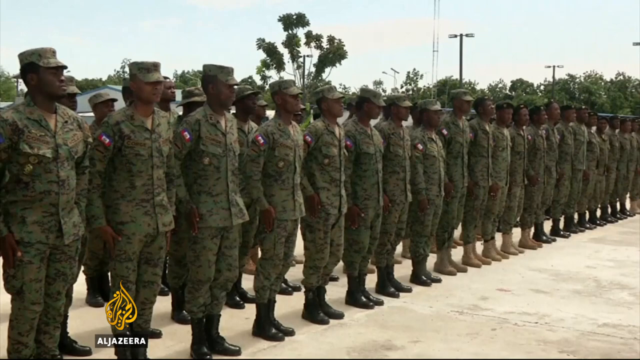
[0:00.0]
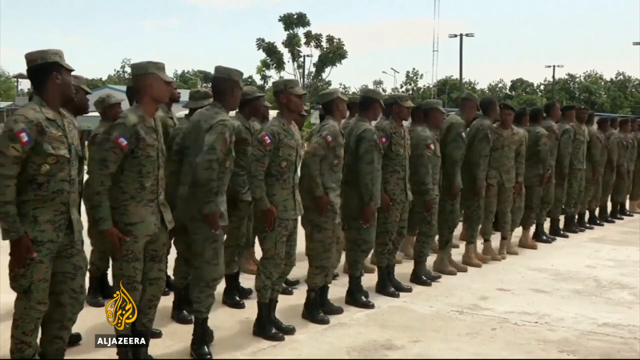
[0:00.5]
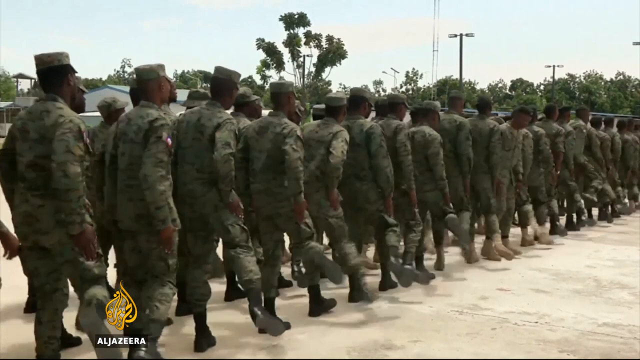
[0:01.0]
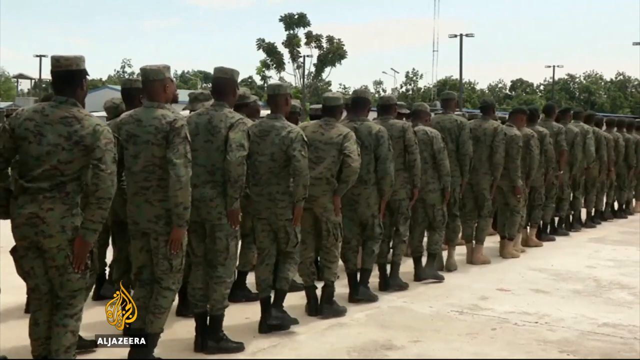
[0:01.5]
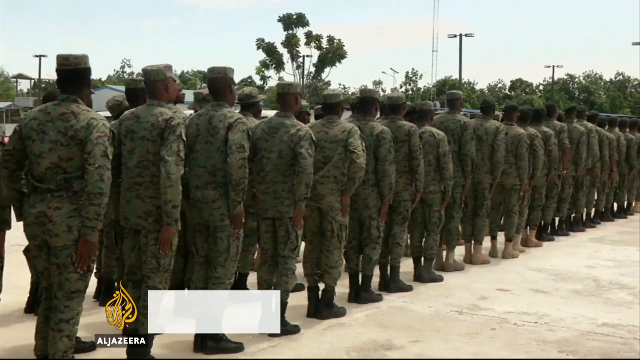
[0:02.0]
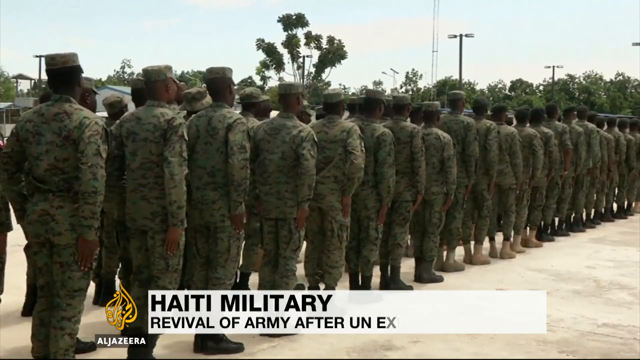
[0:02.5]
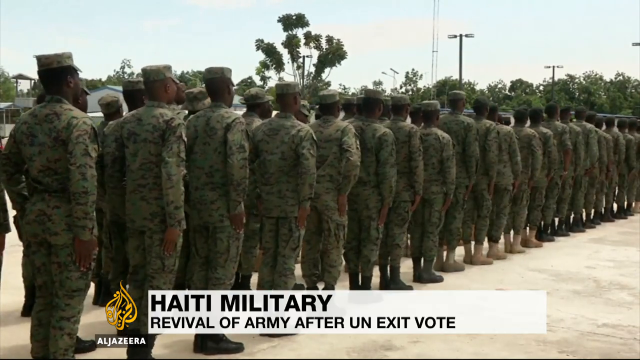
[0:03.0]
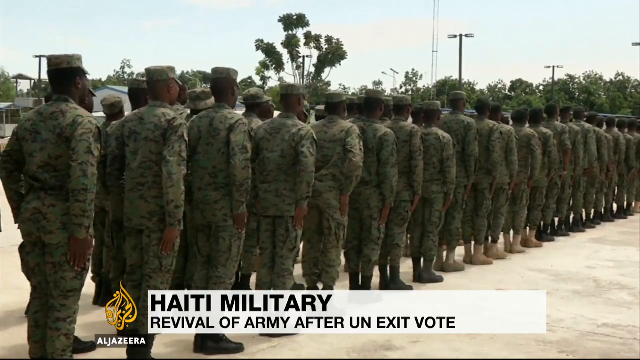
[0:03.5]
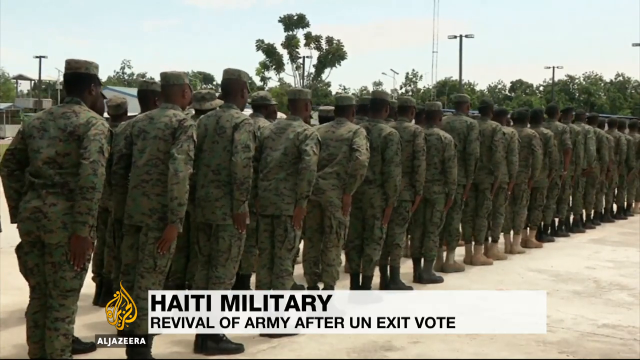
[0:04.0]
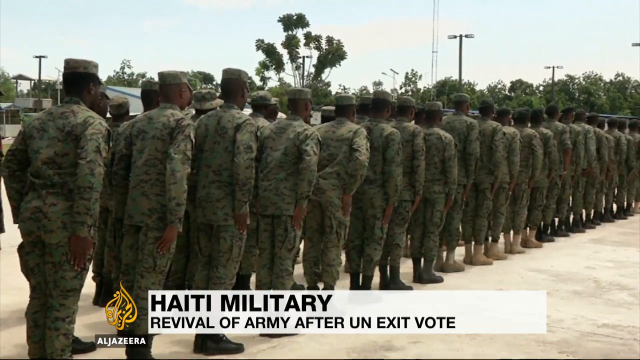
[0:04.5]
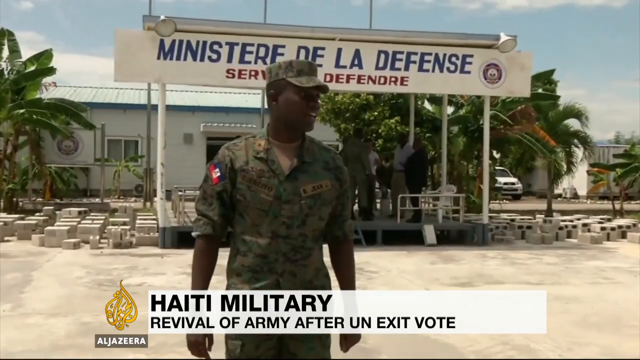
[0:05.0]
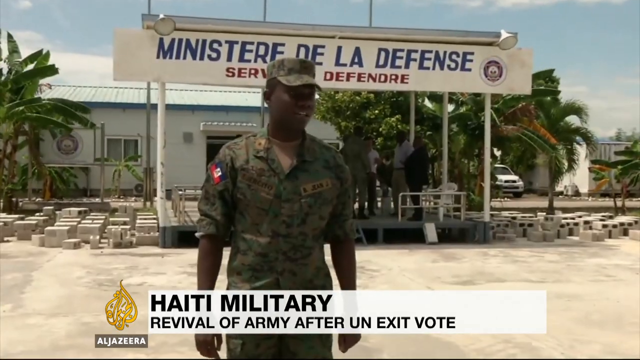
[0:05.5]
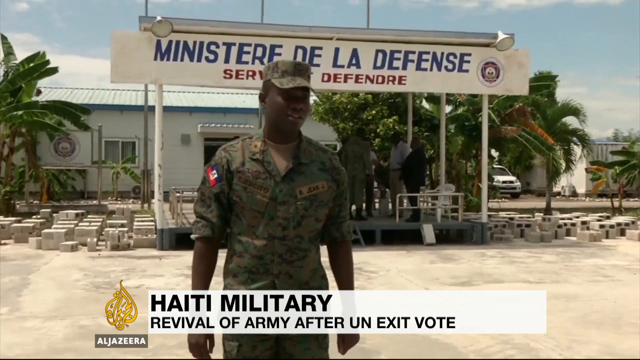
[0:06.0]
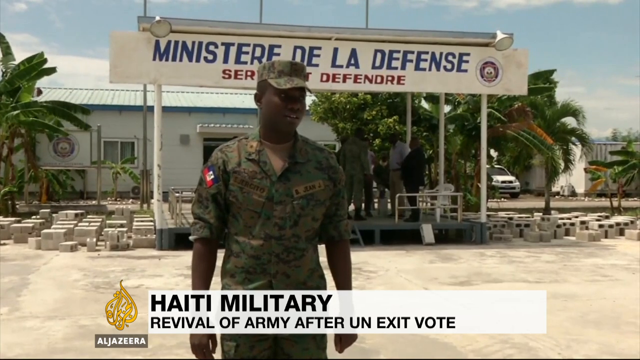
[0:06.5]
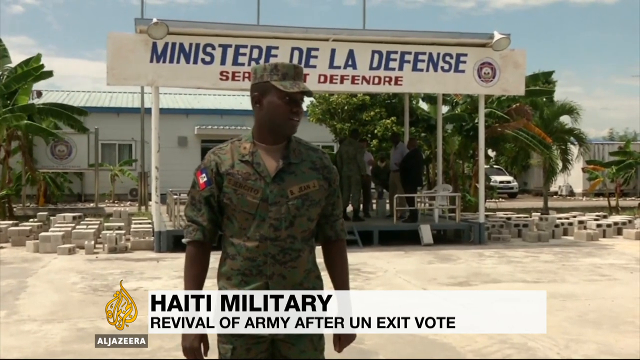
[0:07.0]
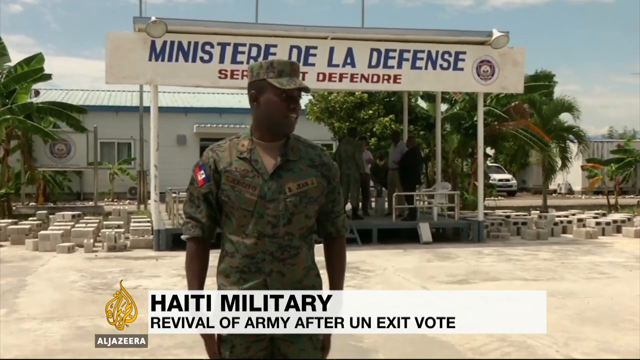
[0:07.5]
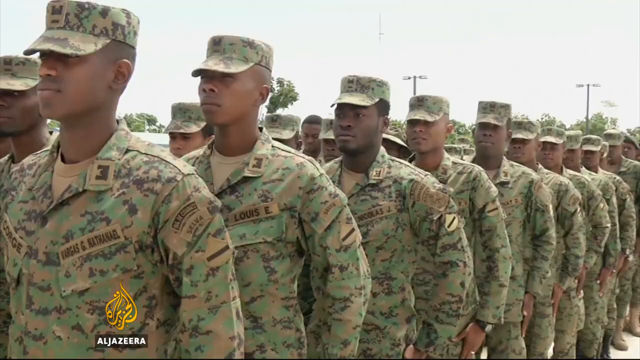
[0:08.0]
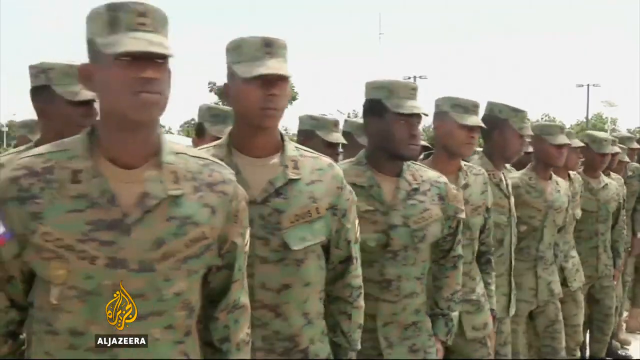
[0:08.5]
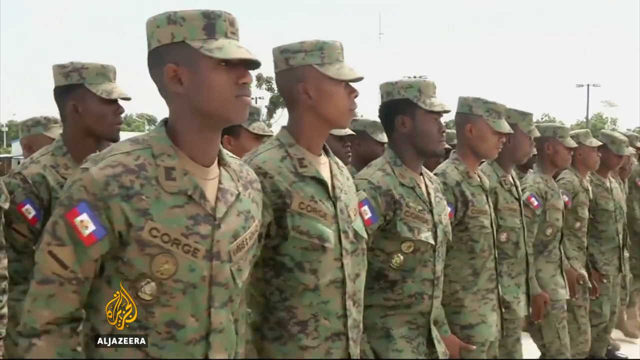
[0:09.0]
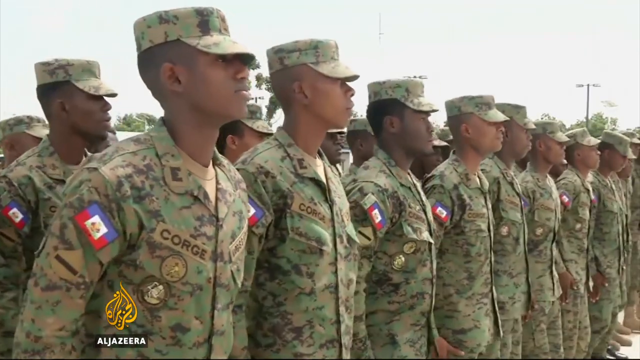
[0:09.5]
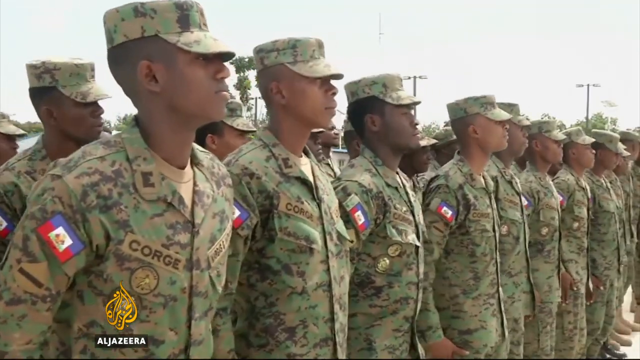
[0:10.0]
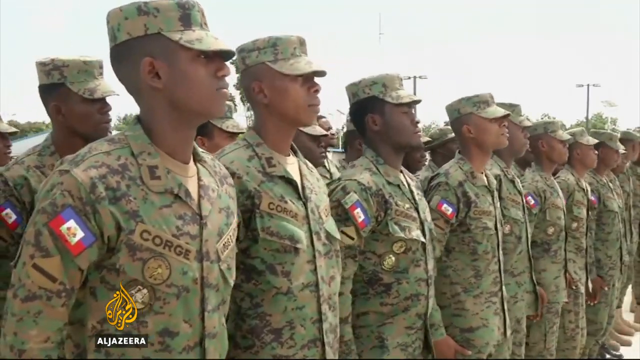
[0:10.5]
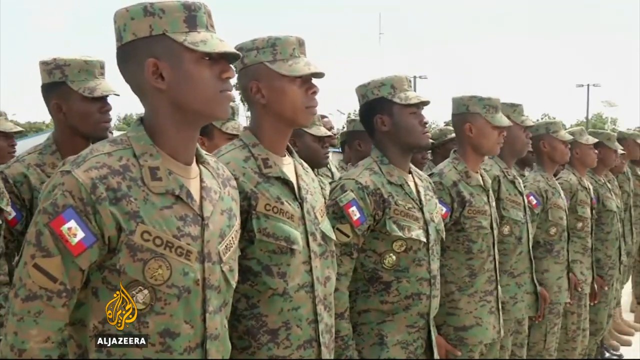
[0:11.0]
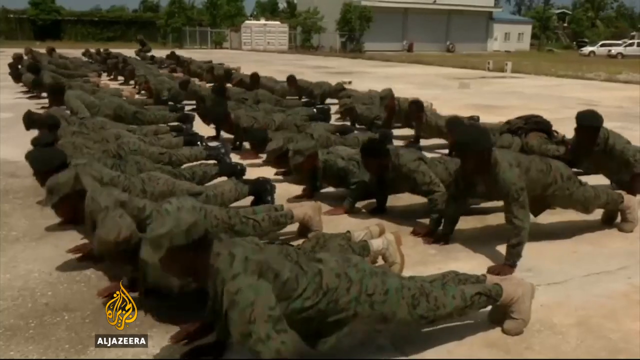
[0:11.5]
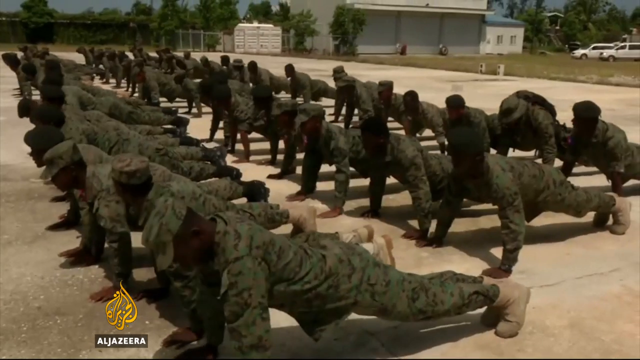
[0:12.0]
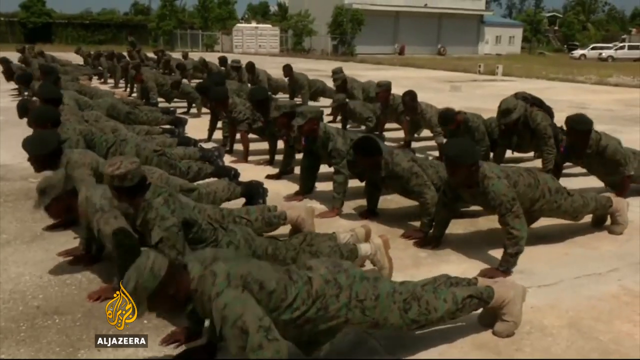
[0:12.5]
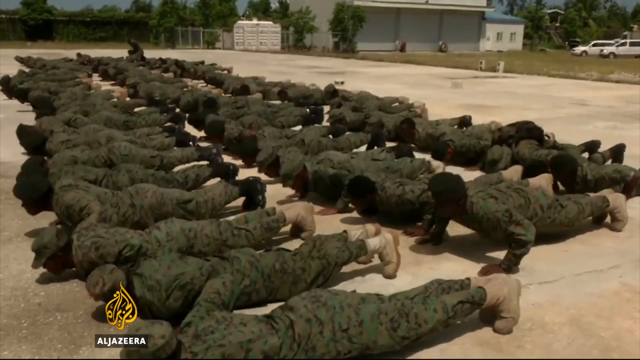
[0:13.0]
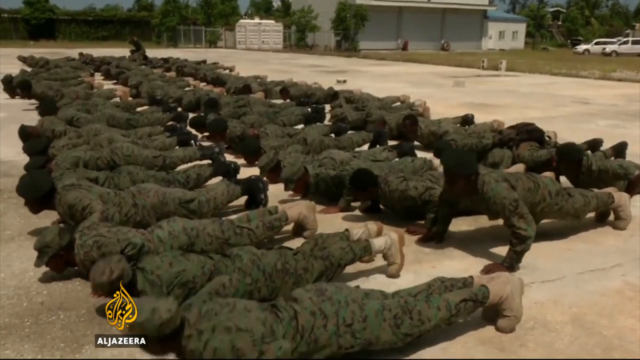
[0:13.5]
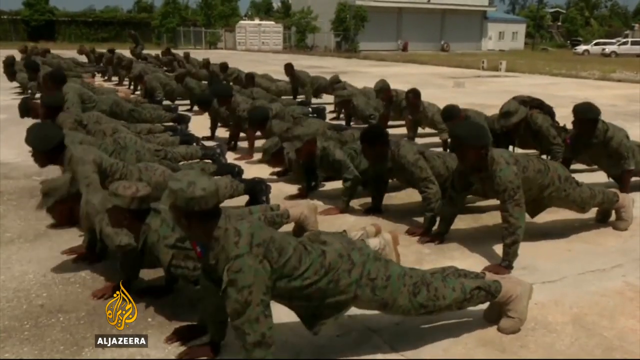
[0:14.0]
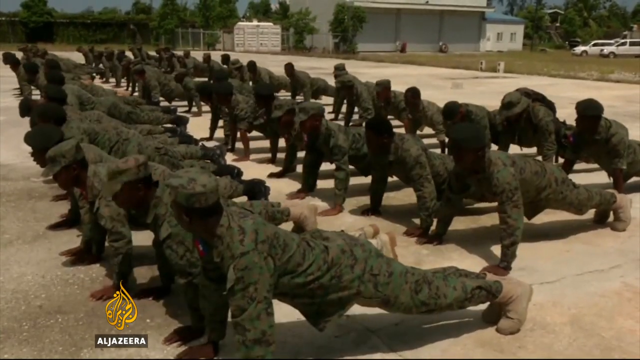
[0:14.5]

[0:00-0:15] Members of the Haitian military are in their fatigues, apparently doing some sort of exercise drills. They wear army-green camouflage pants and tops and squarish-looking hats with wide brims. They do push-ups. Some have sand-colored boots and others have black boots. Their name or the military name is on the right chest, and there is some sort of patch or flag on the right shoulder of the fatigue shirt. They are all uniform in the way they stand and turn. On-screen text reads "Haitian military revival of army after". This appears to be an Al Jazeera recording.